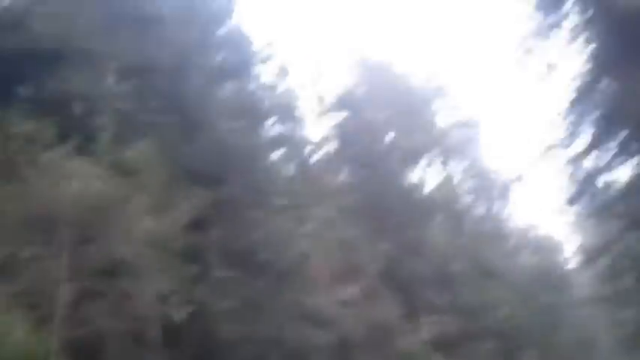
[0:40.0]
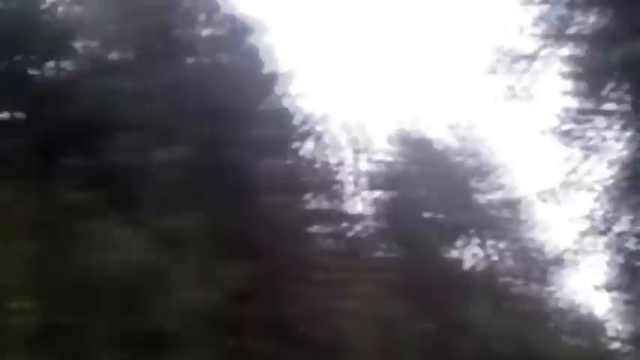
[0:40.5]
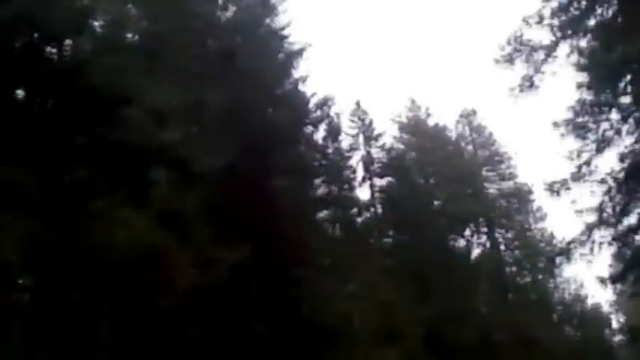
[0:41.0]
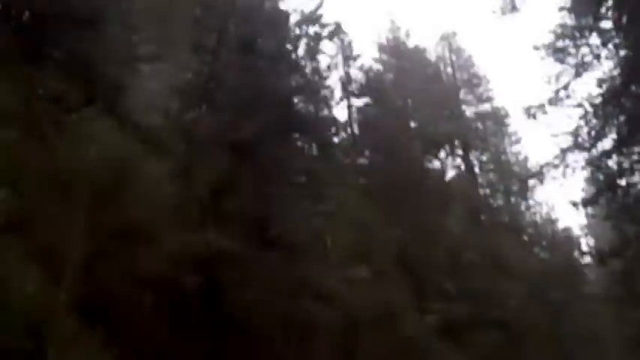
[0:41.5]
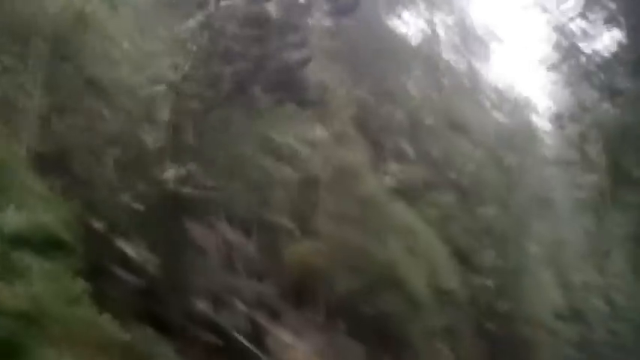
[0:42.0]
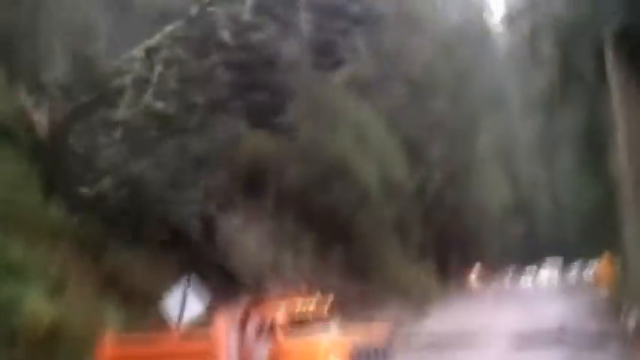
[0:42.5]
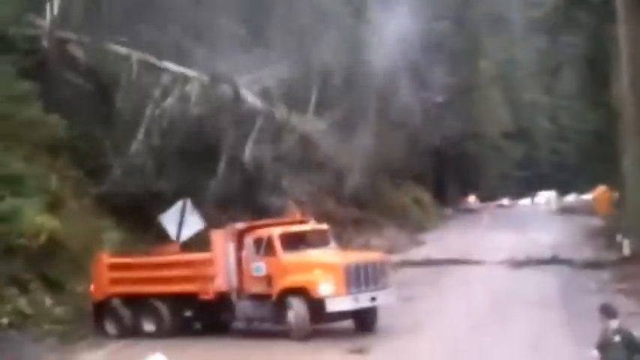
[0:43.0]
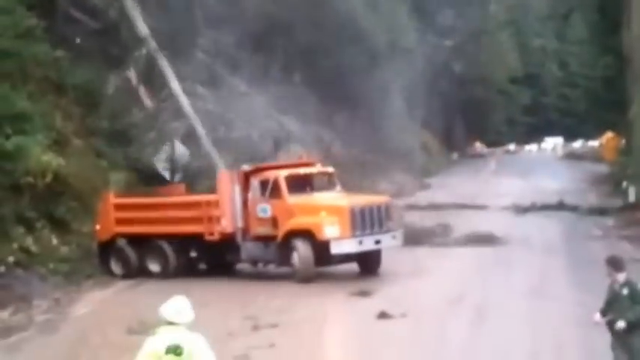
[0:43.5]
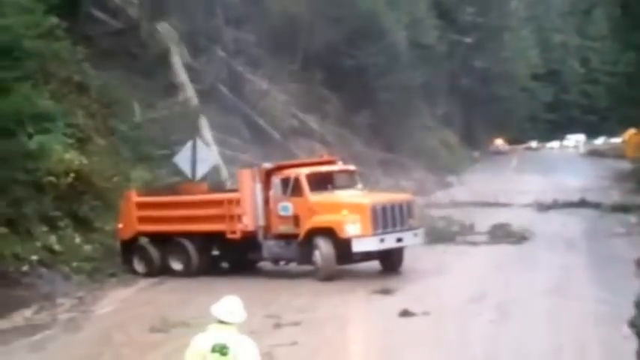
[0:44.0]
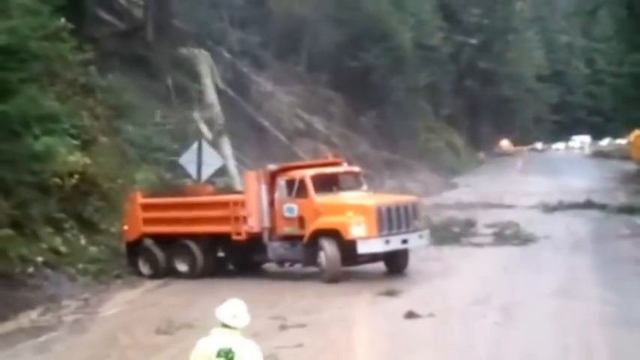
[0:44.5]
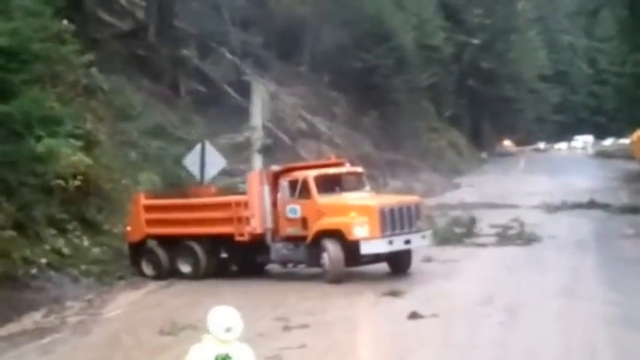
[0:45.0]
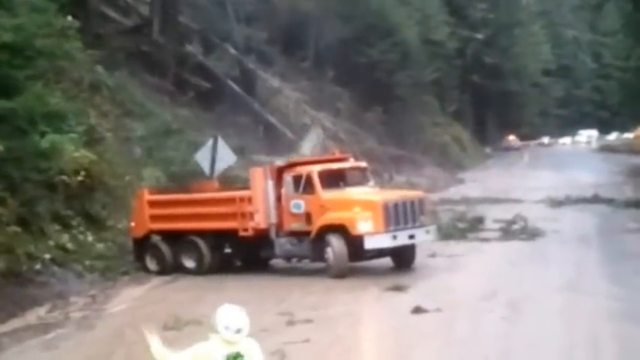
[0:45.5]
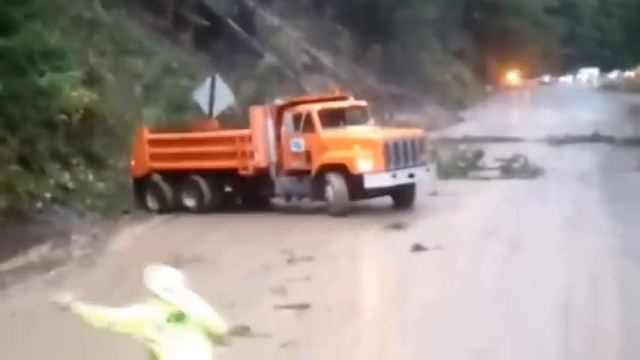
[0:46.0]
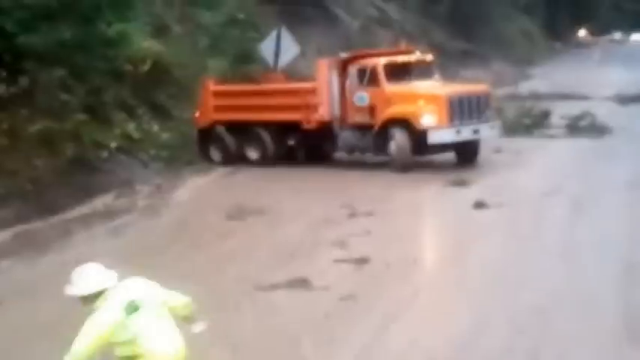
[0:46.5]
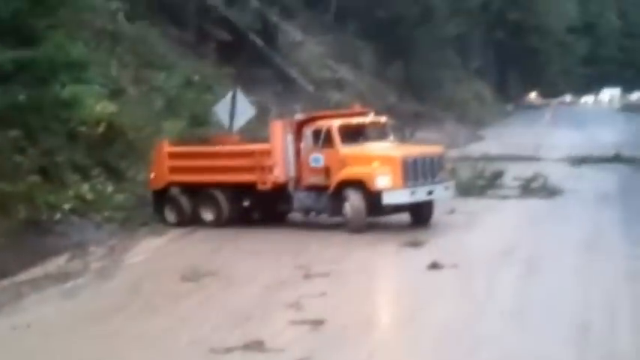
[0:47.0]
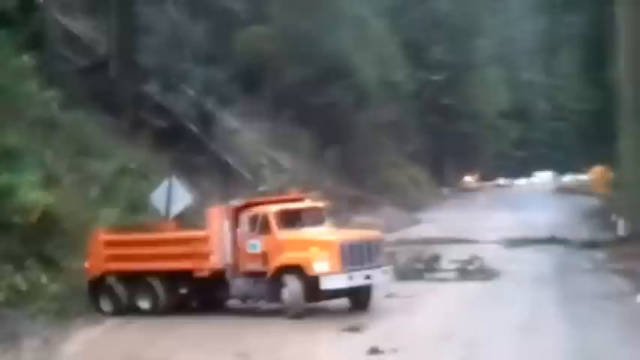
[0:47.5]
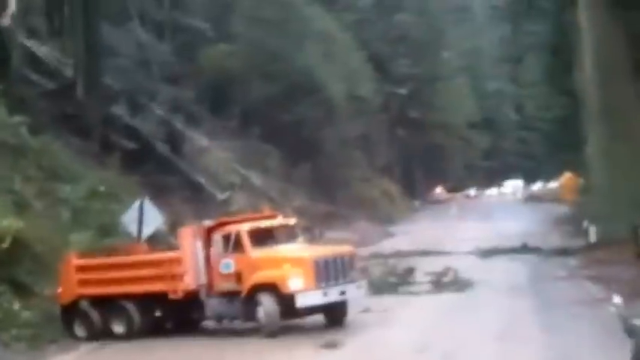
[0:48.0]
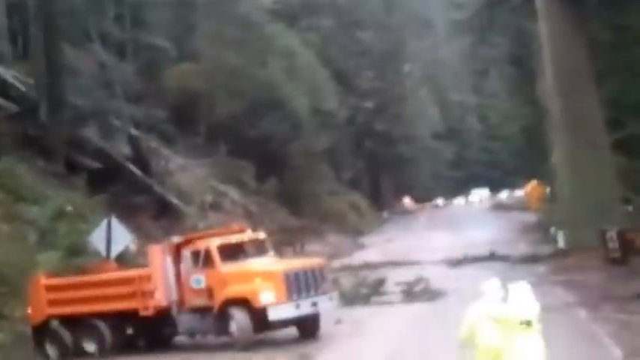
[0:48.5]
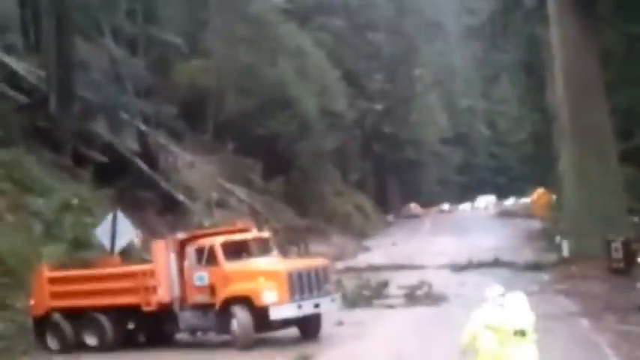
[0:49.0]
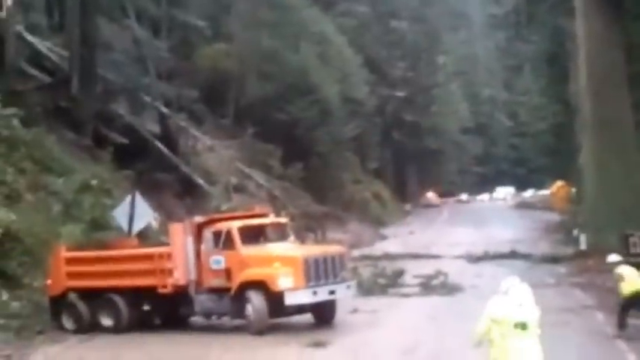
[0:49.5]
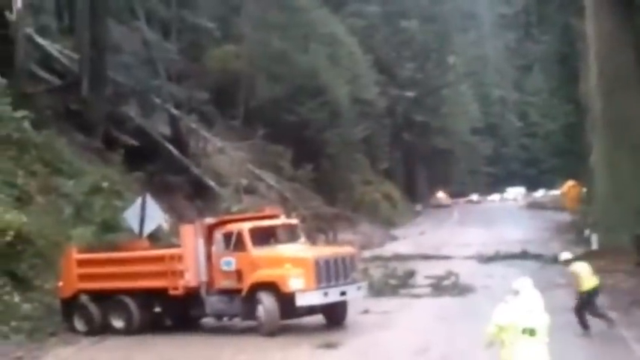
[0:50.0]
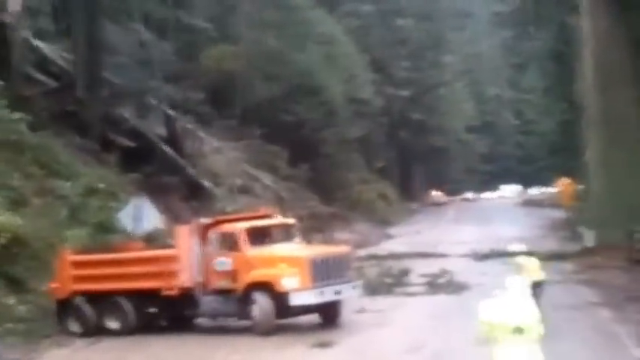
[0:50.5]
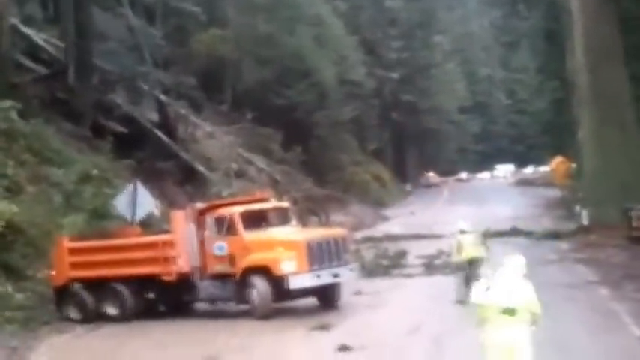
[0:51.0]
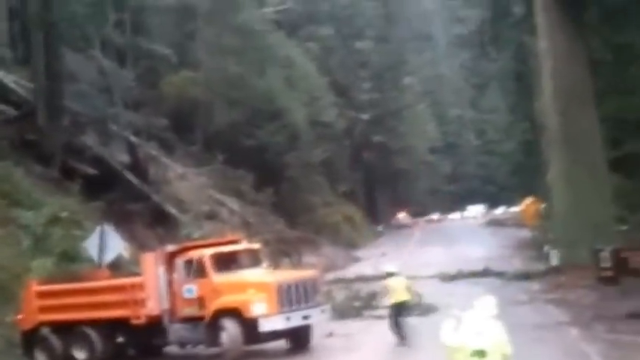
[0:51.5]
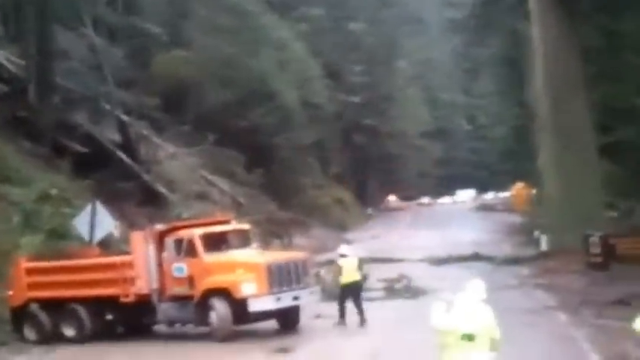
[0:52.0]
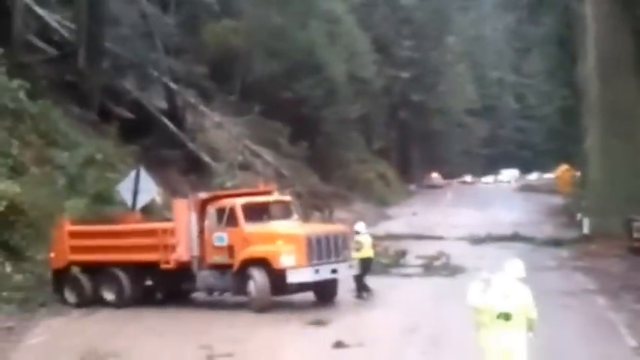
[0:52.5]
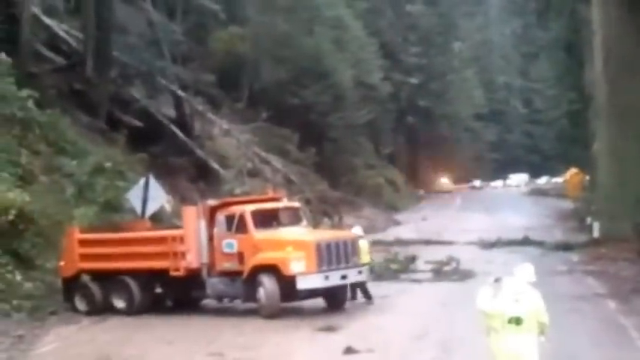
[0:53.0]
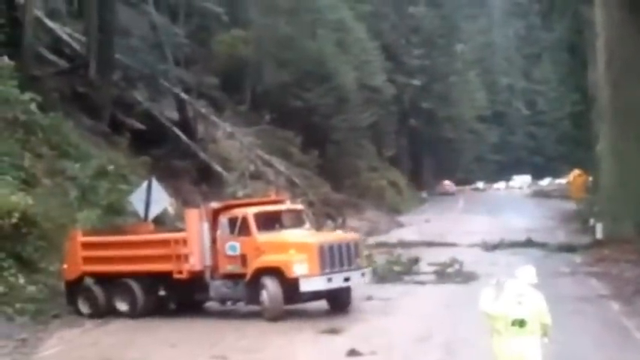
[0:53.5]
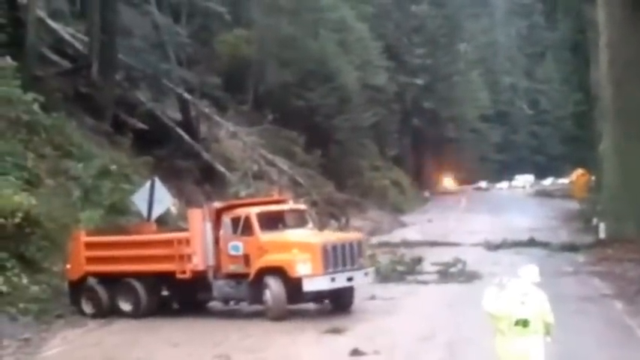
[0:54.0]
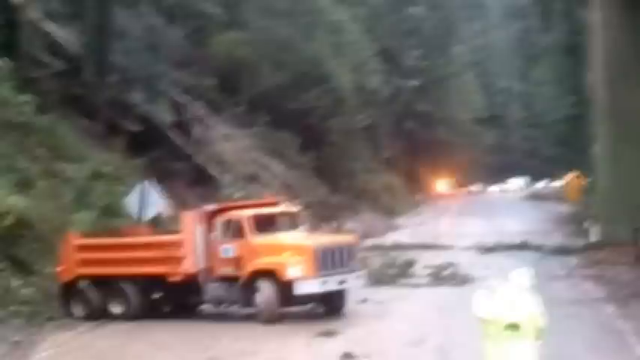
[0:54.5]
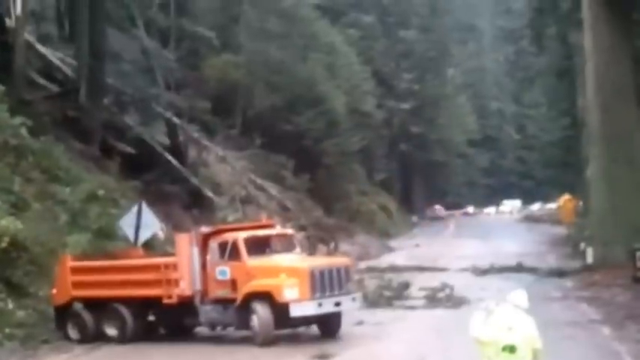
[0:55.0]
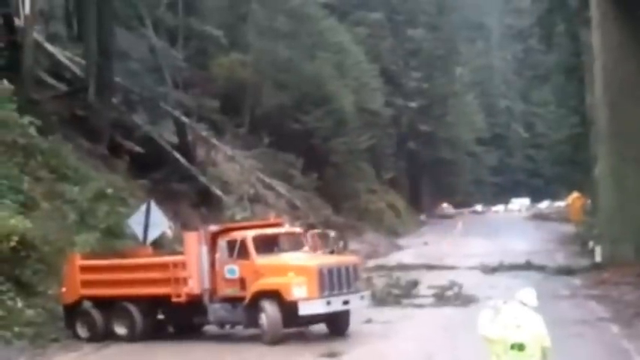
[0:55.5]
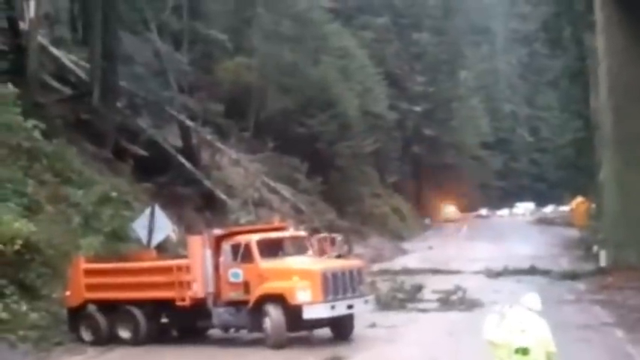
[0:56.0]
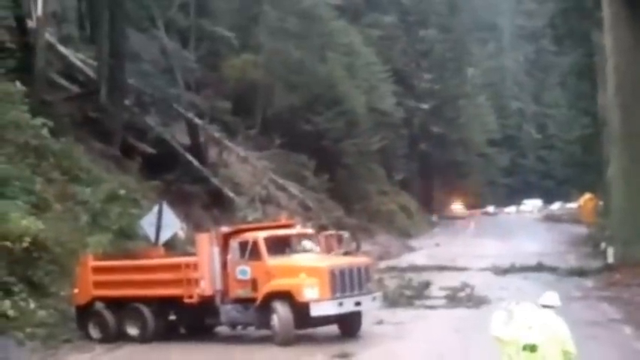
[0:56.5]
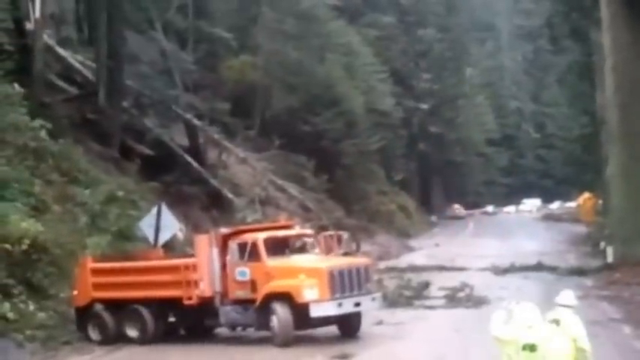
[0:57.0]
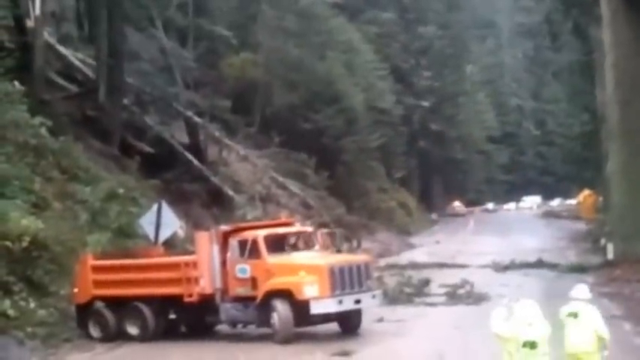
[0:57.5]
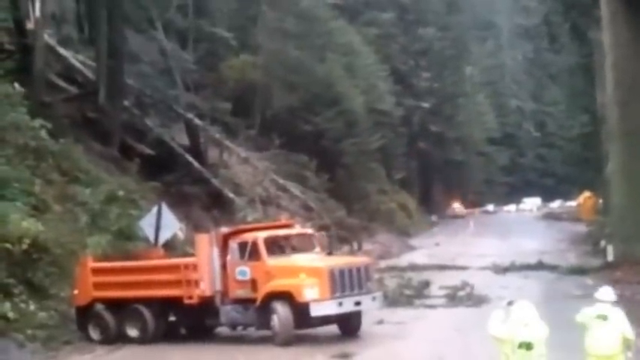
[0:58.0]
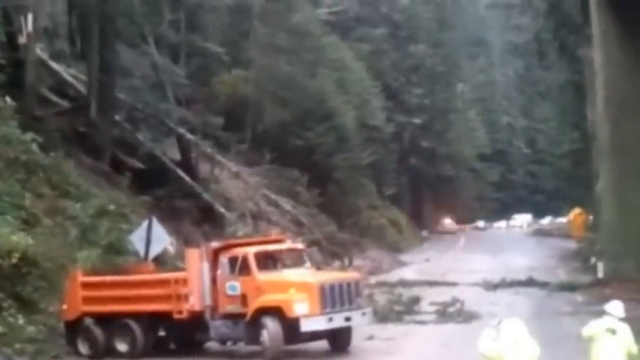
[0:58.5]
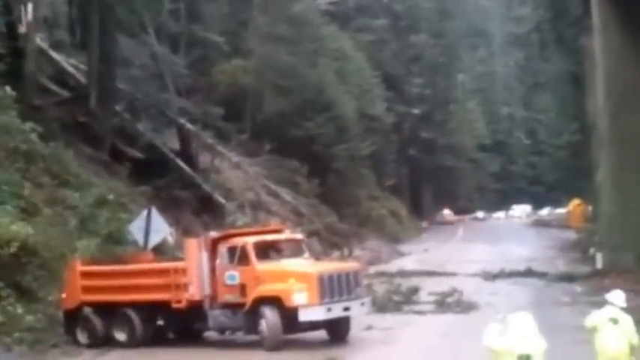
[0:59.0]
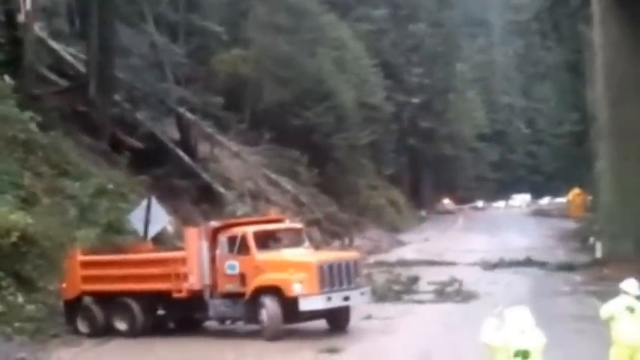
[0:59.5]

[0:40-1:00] A tree tumbles rapidly to the ground on the left side of the orange truck carrying the broken street sign, barely missing it. A person runs to the truck, gets in on the driver's side and sits down as if about to move it. Another person in an all-yellow jumpsuit, apparently protective gear, and a white helmet stands with a law officer, trying to get away from the spot. Three others wear the same attire; one of them takes a picture of the scene with a cell phone while another turns and walks away. Down the road, traffic is stopped by a road closure, with cars blocking the road with their siren lights activated.